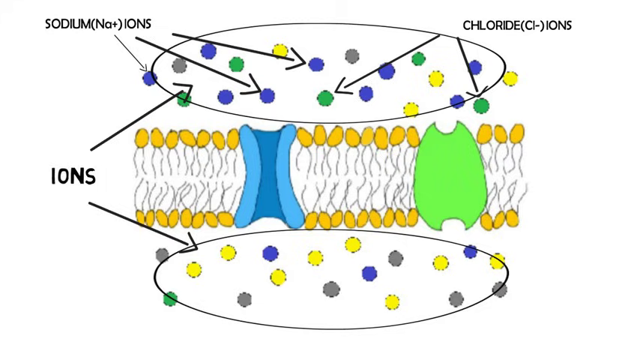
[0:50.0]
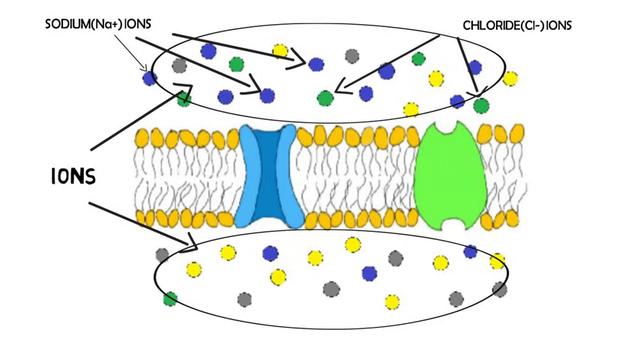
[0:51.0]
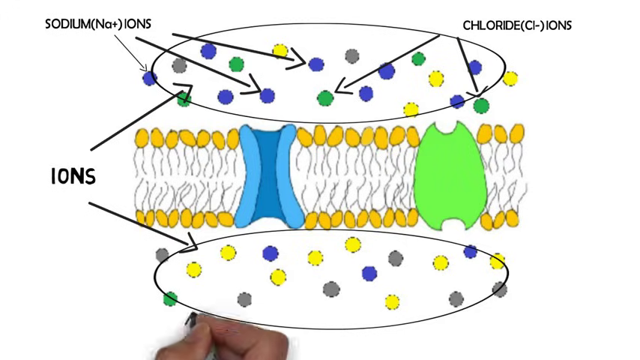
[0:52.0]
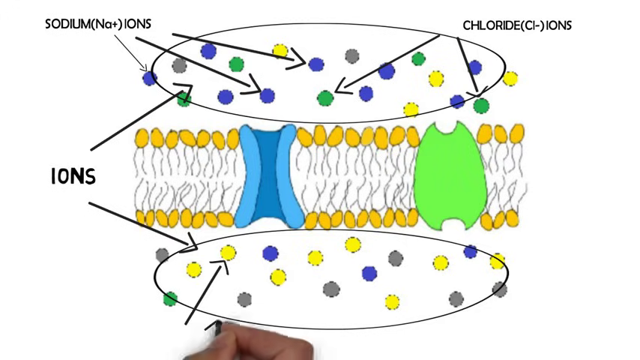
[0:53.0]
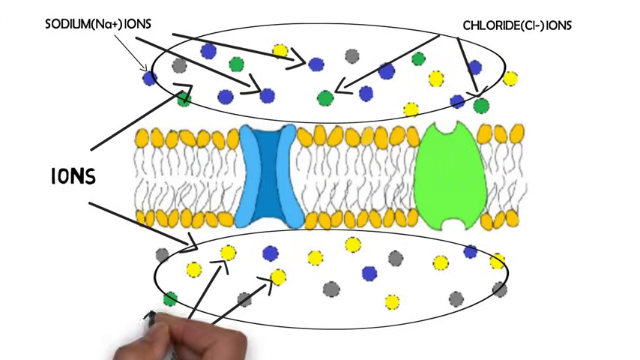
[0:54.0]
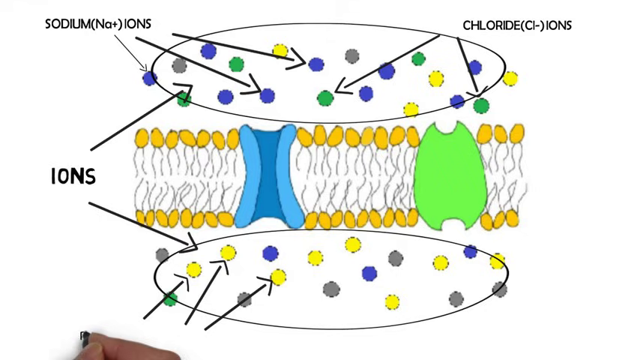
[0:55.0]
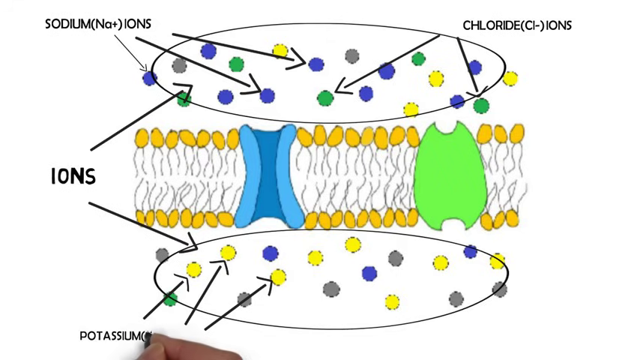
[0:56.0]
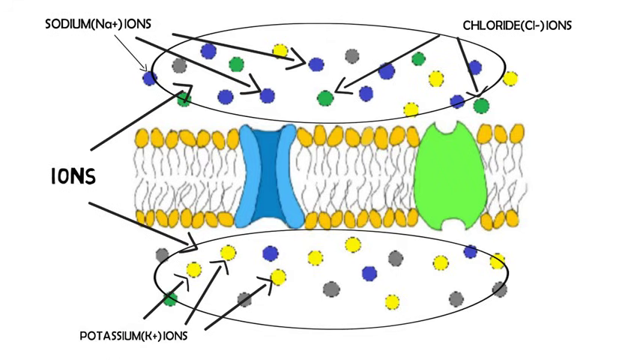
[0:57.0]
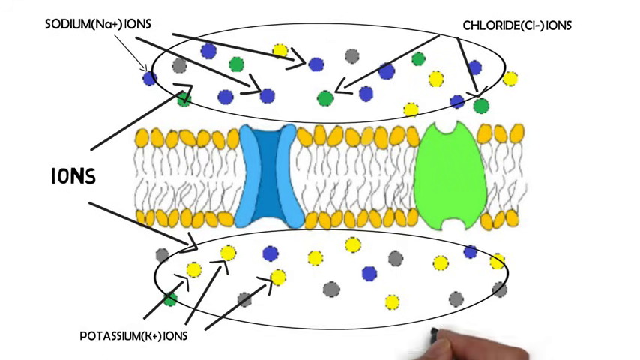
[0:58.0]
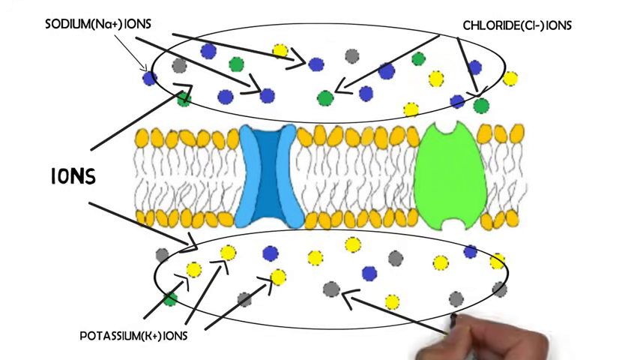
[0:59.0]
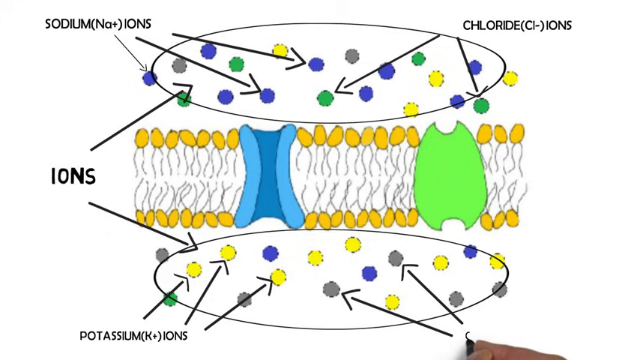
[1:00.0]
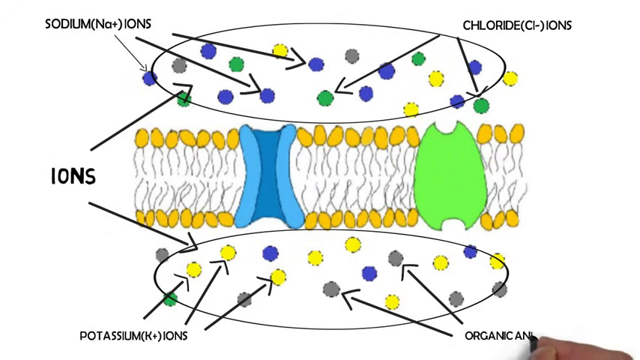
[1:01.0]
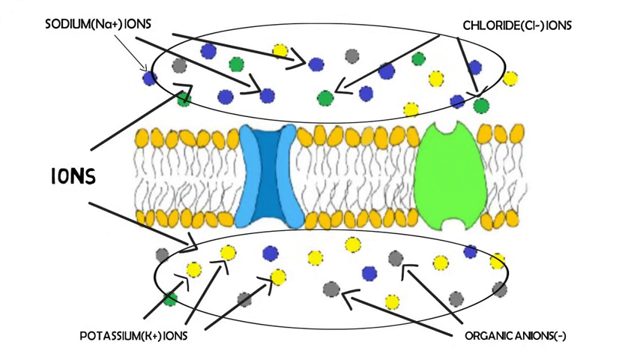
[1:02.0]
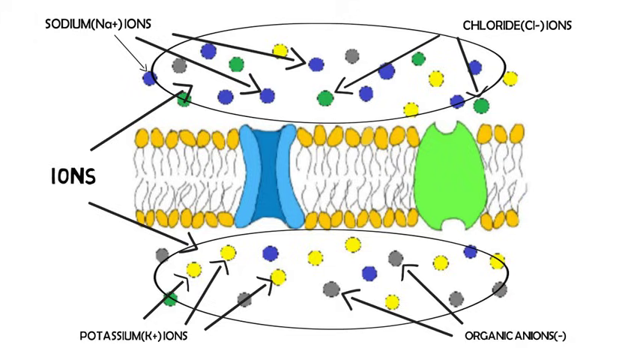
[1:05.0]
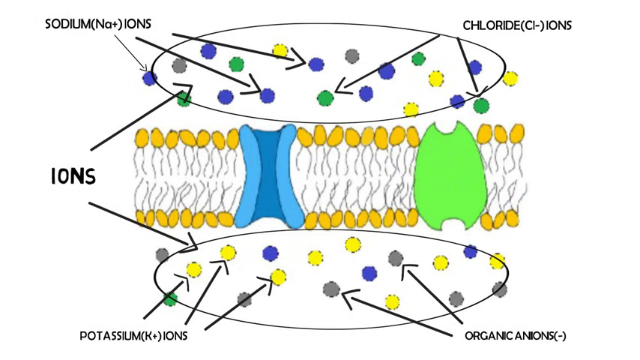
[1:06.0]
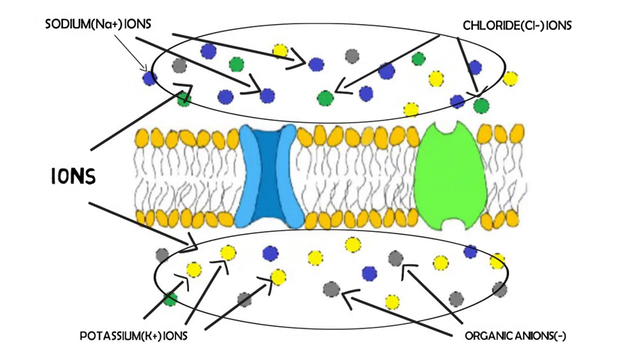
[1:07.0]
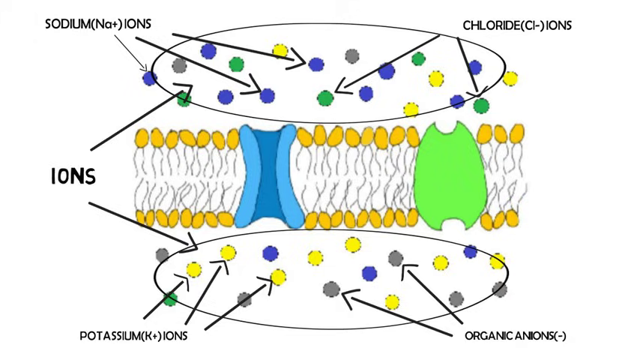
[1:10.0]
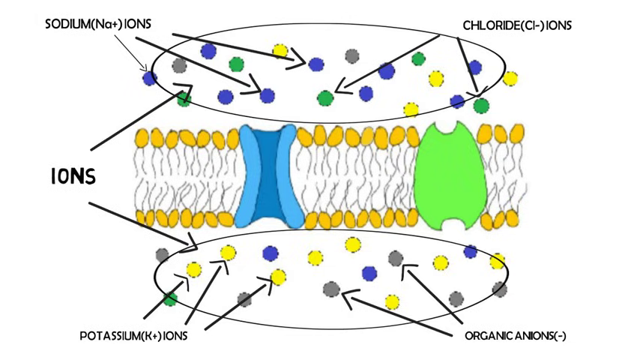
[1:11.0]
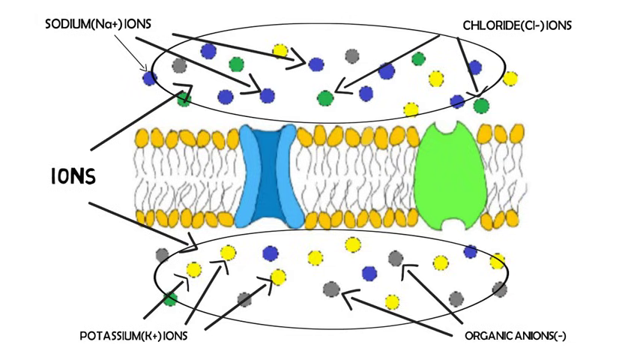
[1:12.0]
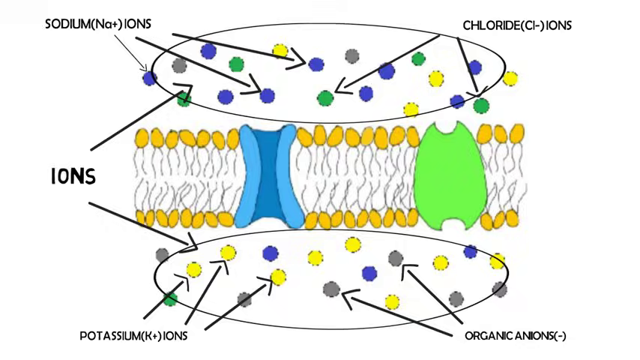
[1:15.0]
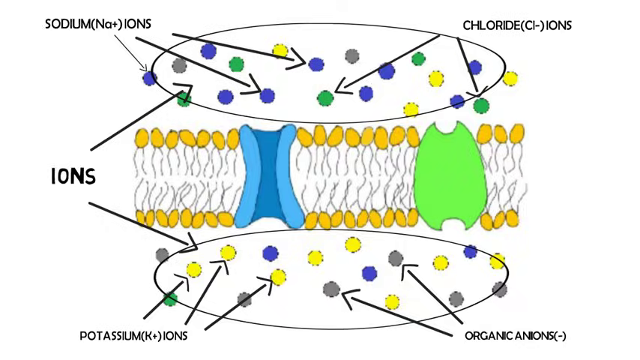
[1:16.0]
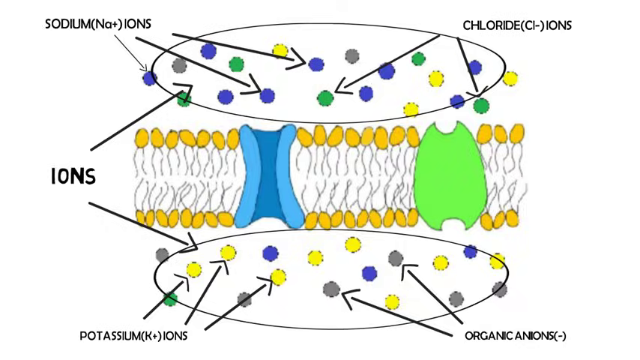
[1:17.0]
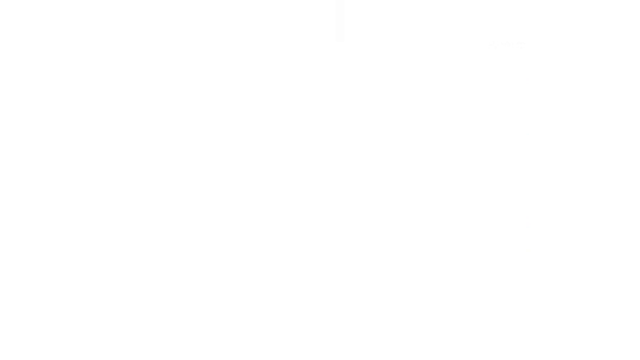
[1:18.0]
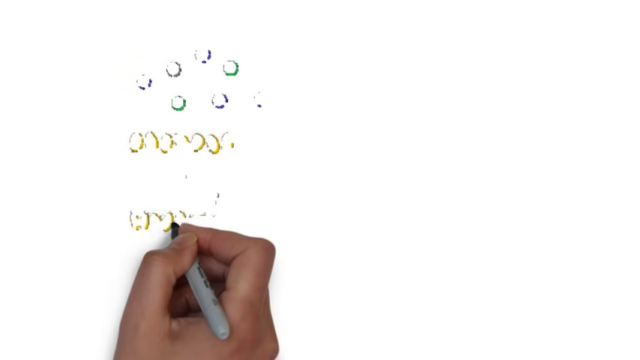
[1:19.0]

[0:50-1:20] The hand writes "potassium ions" and draws about three arrows pointing to the yellow dots, which are positive potassium ions. The gray dots are labeled organic anions, with a minus sign, and a couple of arrows point to them. The video seems to stall, and then the image sweeps to the left as the hand starts writing very rapidly, sped up quite a bit. The hand then sweeps to a white surface, the page is swept clean, and the hand begins putting up the membrane and the various ions again, in the early phase of recreating the image.